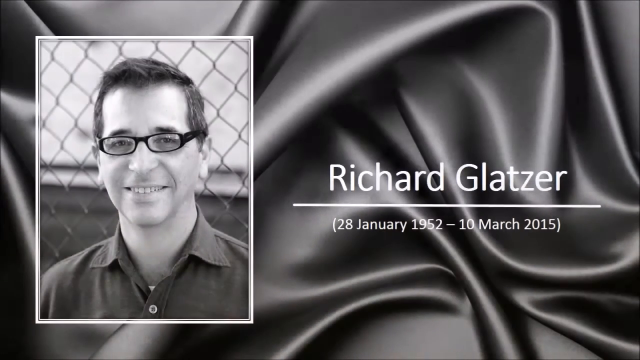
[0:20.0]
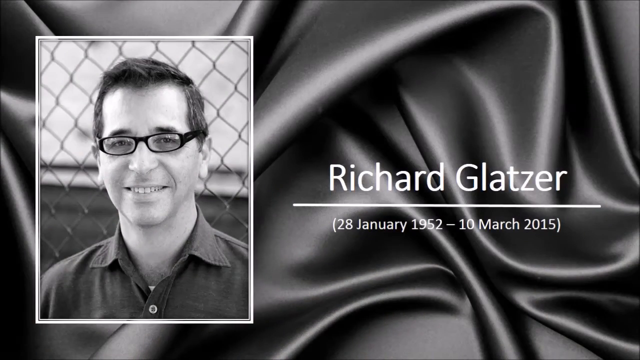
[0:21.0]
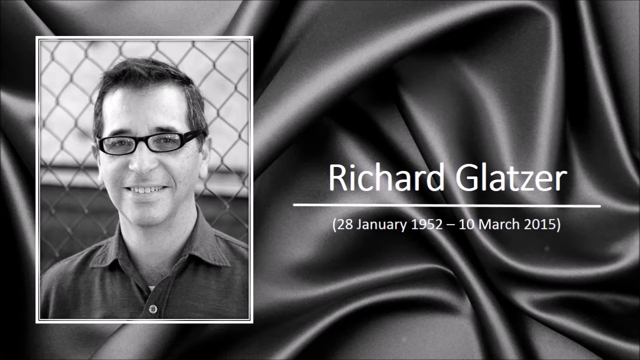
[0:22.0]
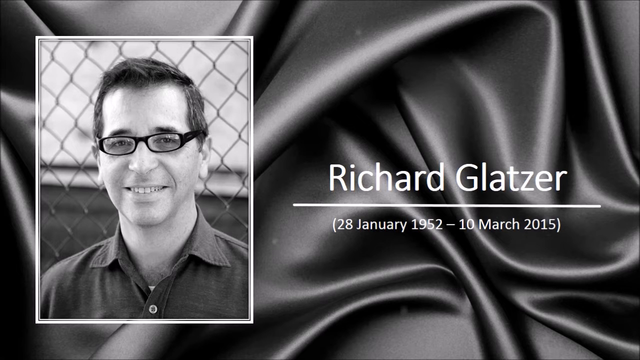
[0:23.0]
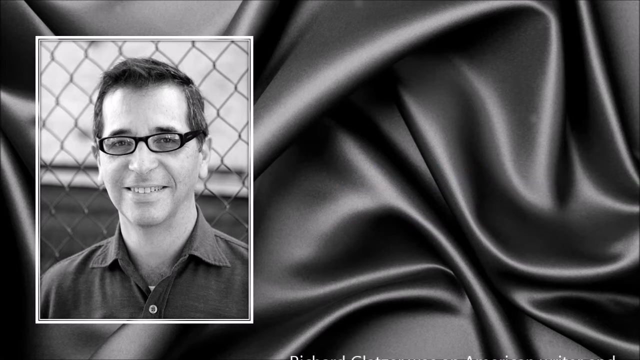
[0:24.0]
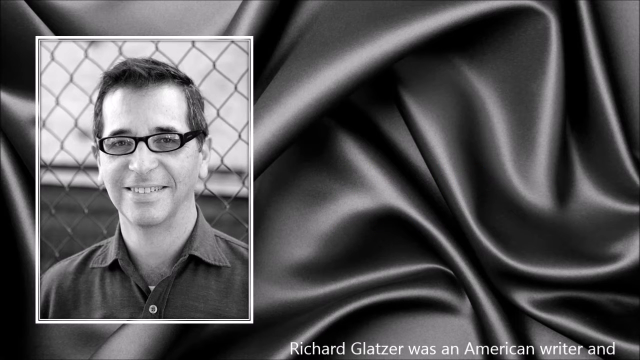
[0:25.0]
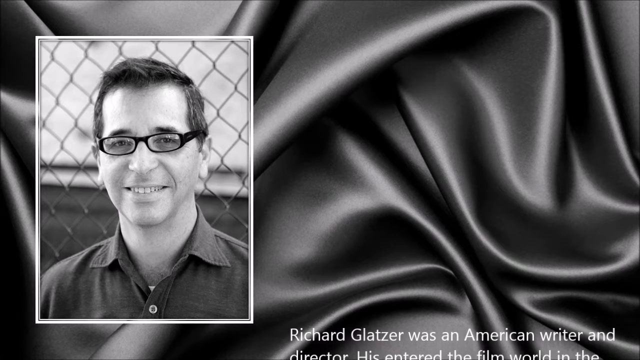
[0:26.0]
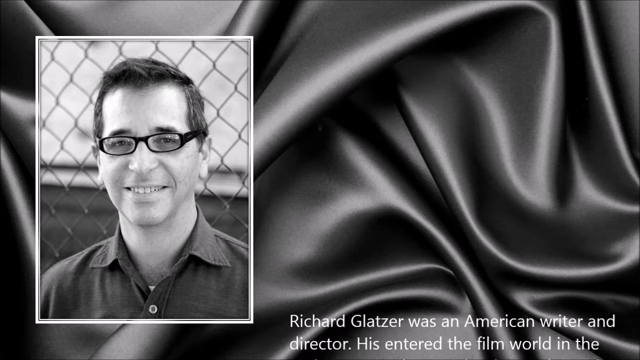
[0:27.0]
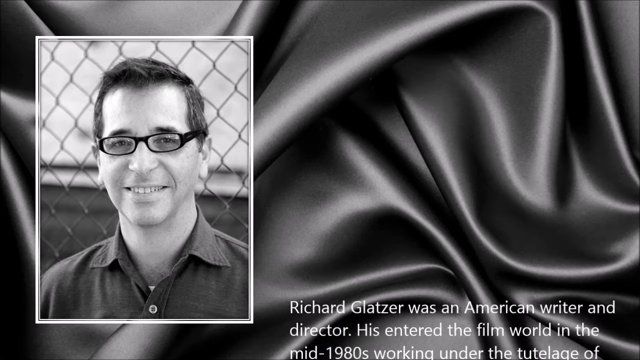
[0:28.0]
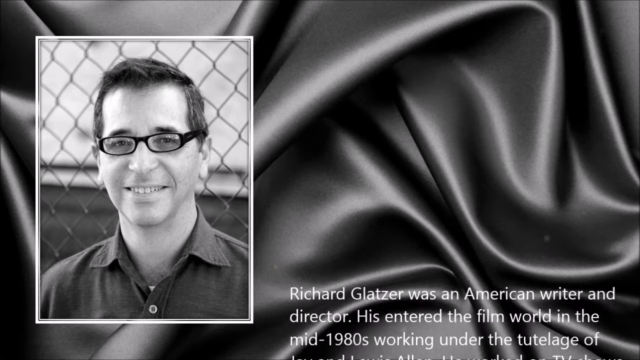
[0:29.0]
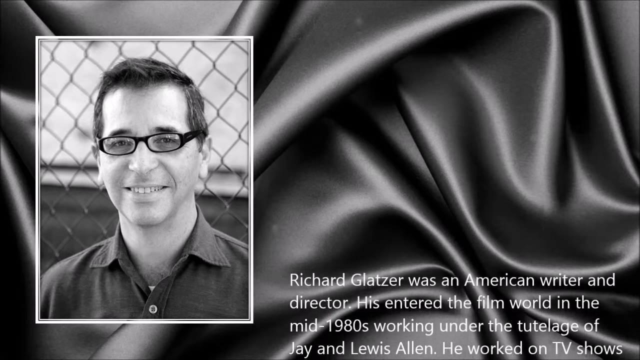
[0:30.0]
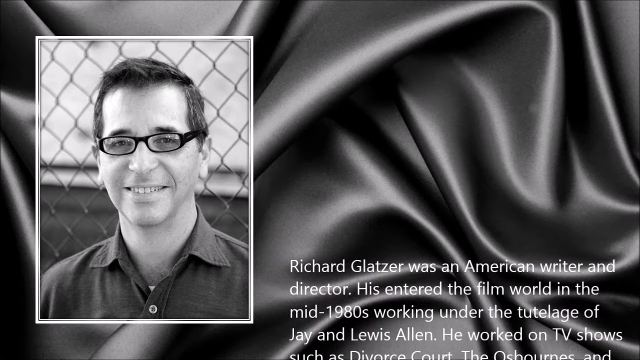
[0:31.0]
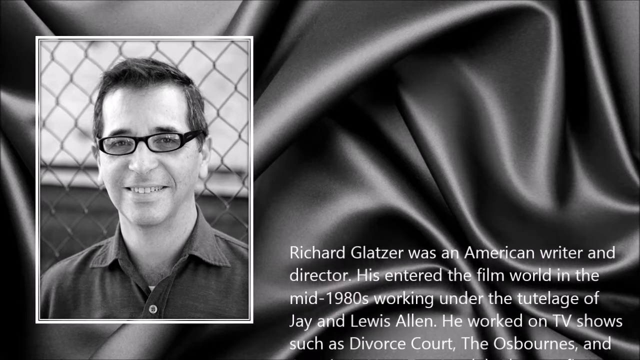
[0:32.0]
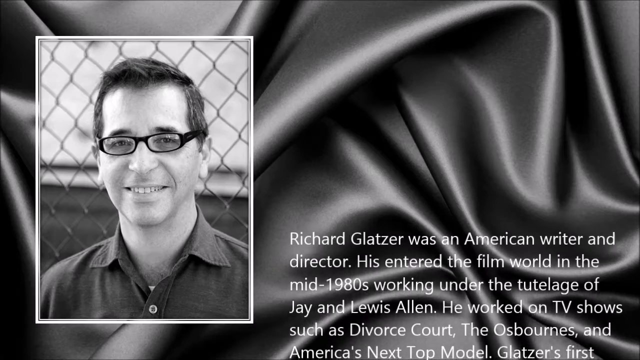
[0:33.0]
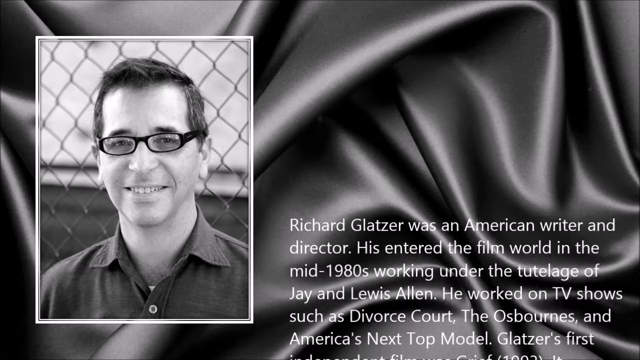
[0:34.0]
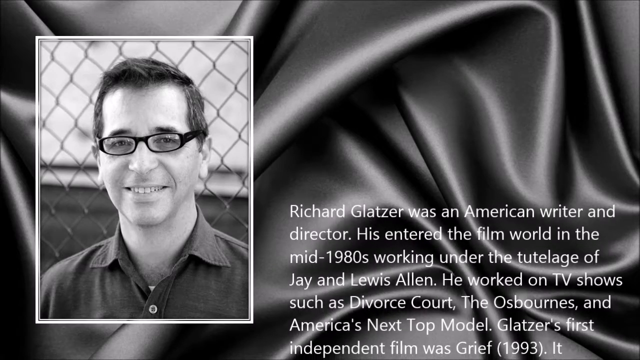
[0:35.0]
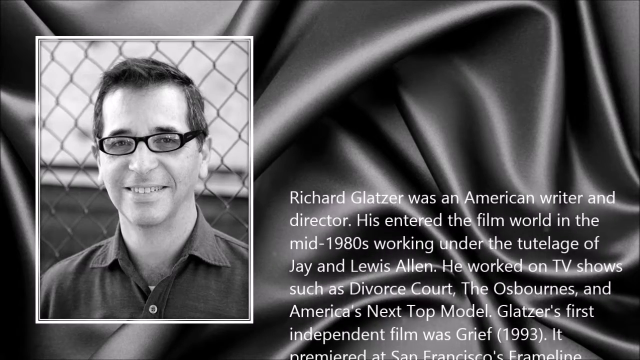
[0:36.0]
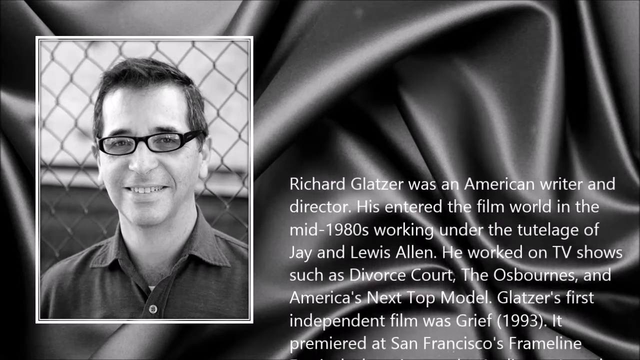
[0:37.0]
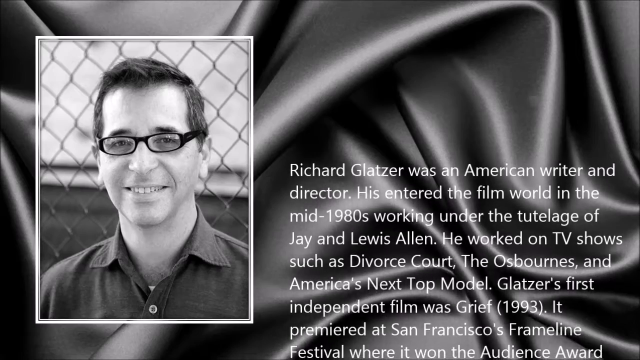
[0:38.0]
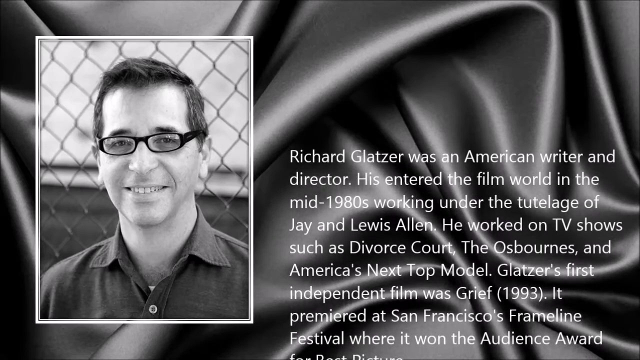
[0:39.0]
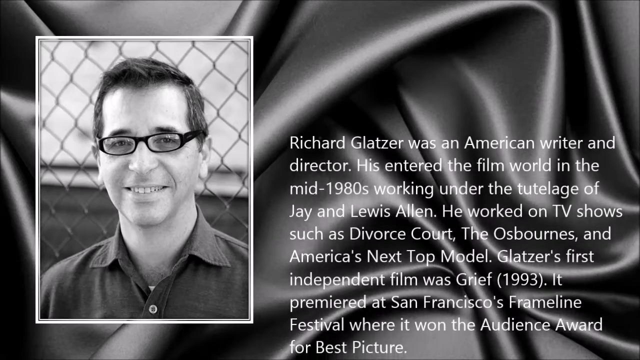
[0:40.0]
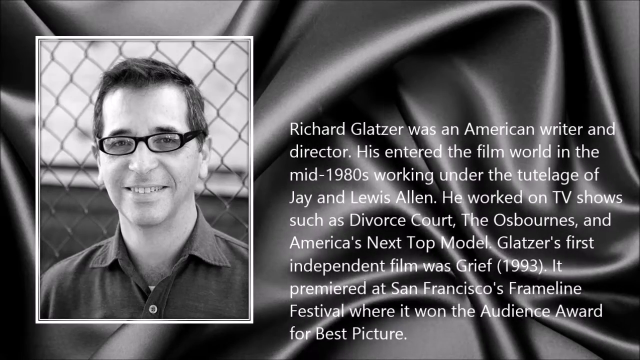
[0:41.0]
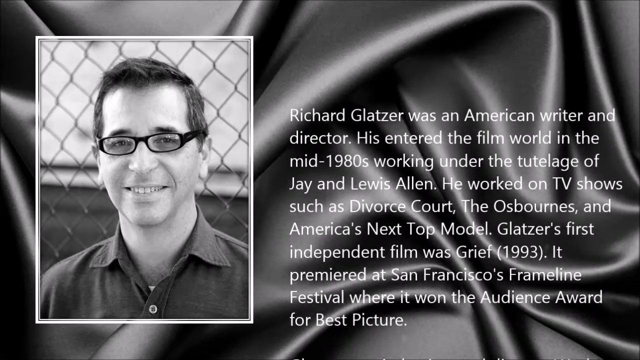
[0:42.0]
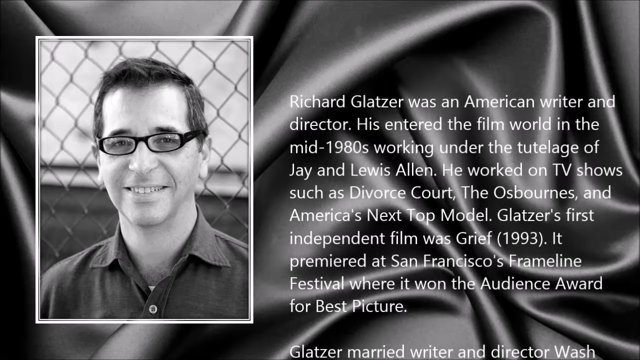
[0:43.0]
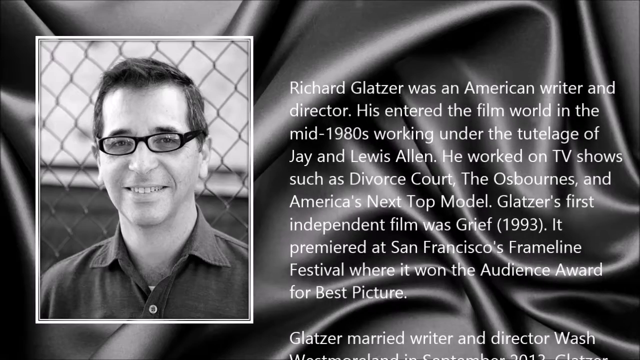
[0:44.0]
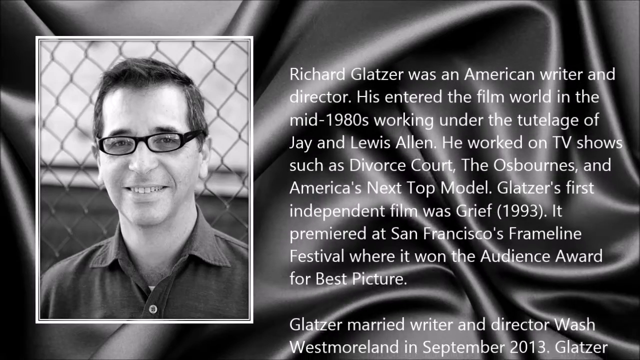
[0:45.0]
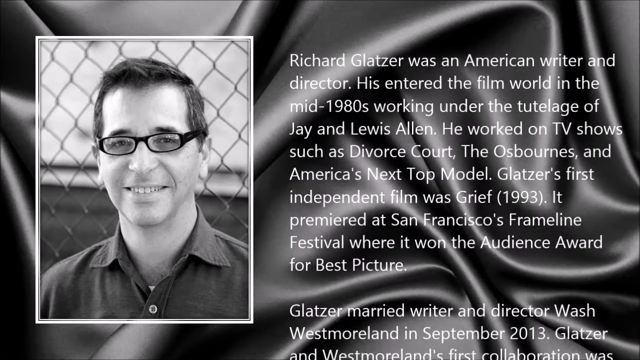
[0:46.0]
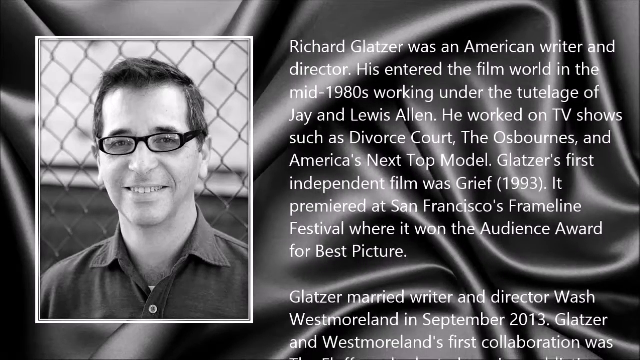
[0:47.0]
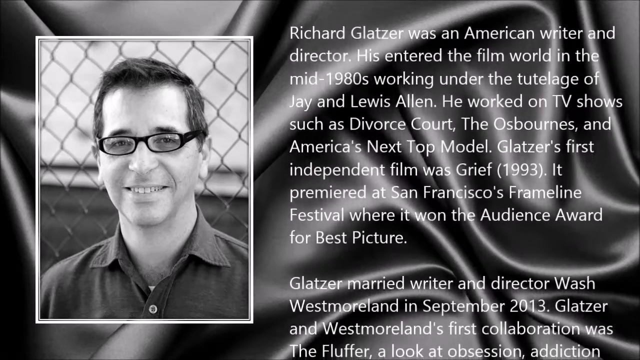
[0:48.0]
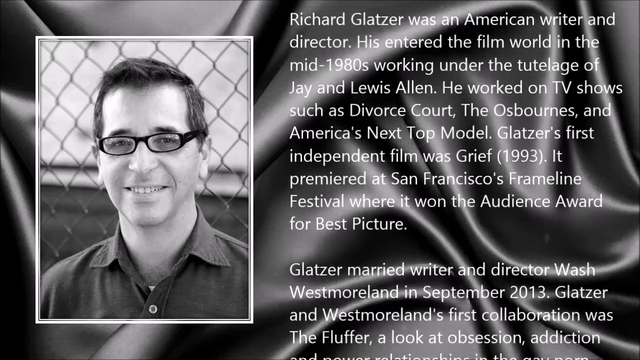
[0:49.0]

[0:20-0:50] A picture shows a man in his fifties wearing rectangular black plastic-rimmed glasses and a dress shirt, smiling in front of a chain-link fence. The name "Richard Glatzer" appears beside him with the dates "20th of January 1952" to "10th of March 2015." The camera pans on this for quite a while, then the name and dates disappear and text starts scrolling in from the bottom. It reads: "Richard Glatzer was an American writer and director. He has entered the film world in the mid-1980s working under the tutelage of J. and Lewis Allen. He worked on TV shows such as Divorce Court, The Osbournes, and America's Next Top Model. Glatzer's first independent film was Grief in 1993. It premiered at the San Francisco's Frameline Festival, where it won the Audience Award for Best Picture. Glatzer married writer and director Wash Westmoreland in September of 2013."